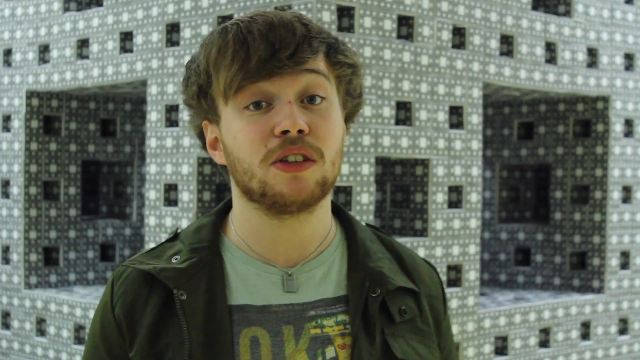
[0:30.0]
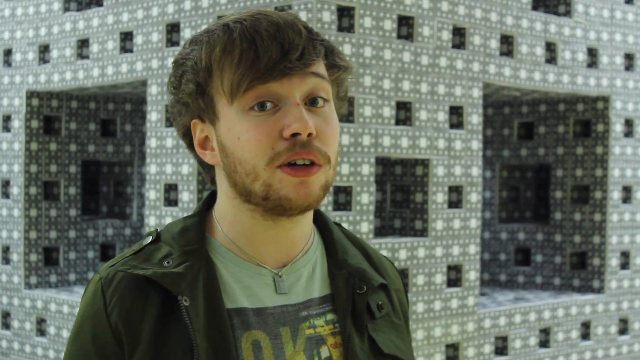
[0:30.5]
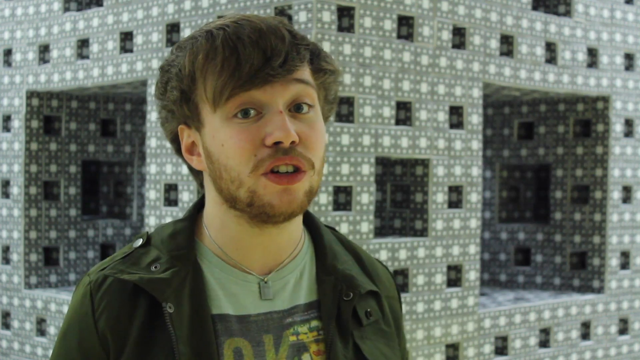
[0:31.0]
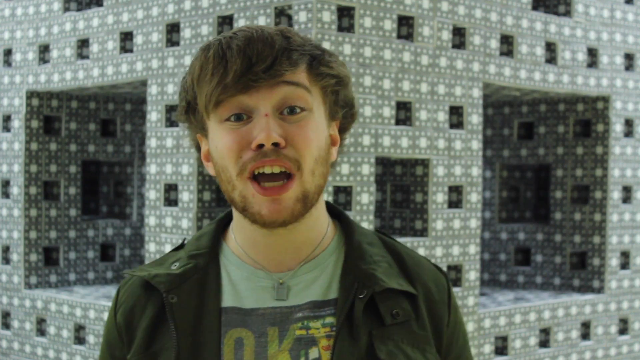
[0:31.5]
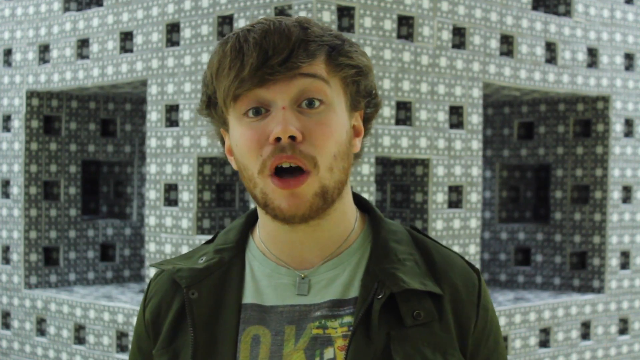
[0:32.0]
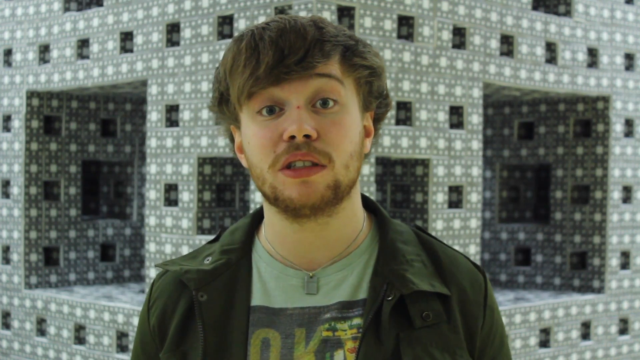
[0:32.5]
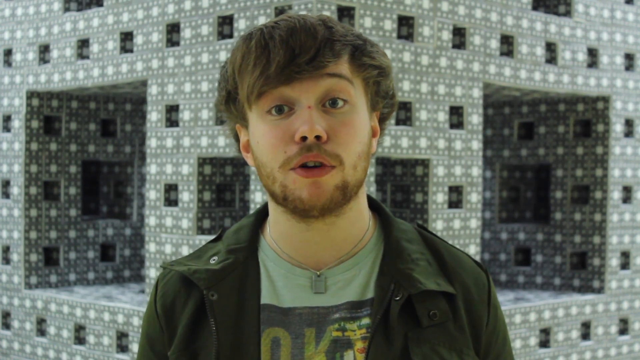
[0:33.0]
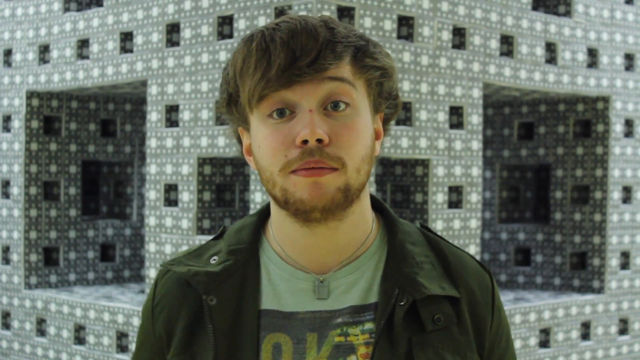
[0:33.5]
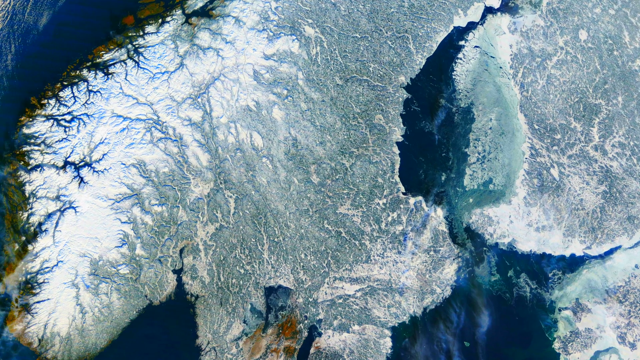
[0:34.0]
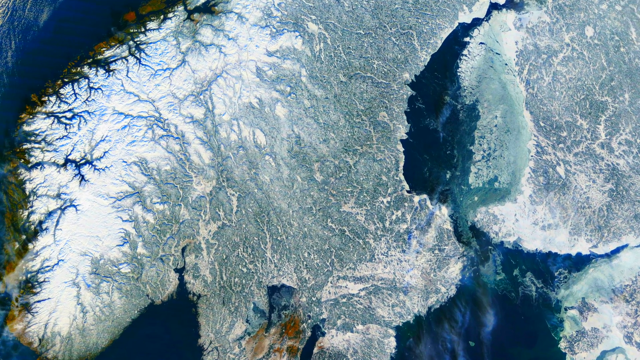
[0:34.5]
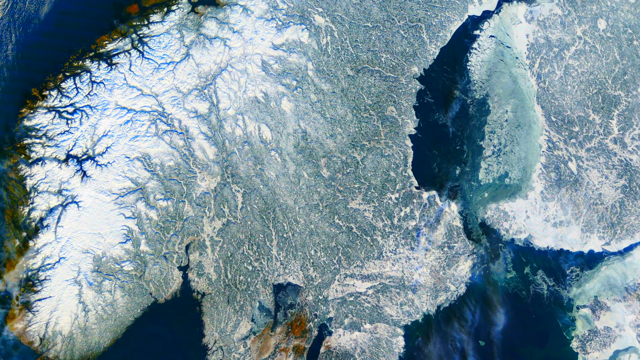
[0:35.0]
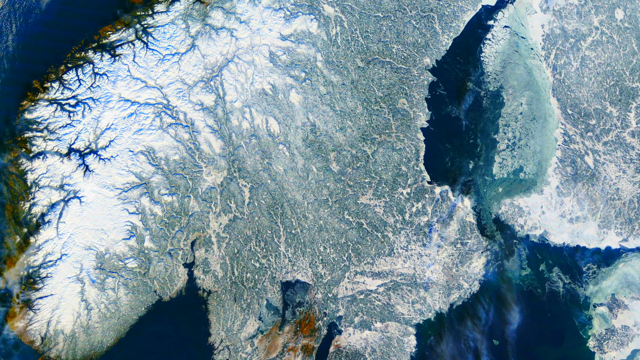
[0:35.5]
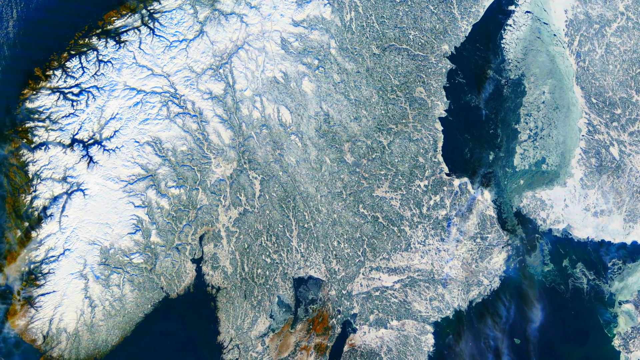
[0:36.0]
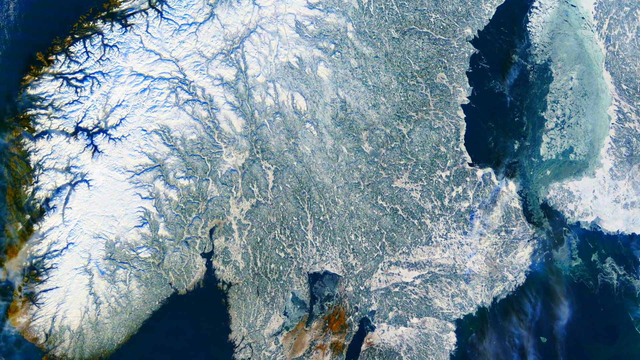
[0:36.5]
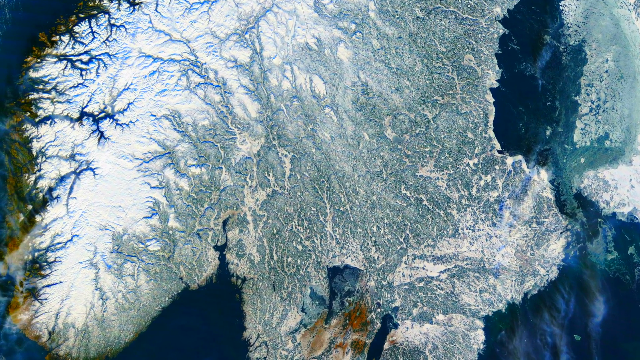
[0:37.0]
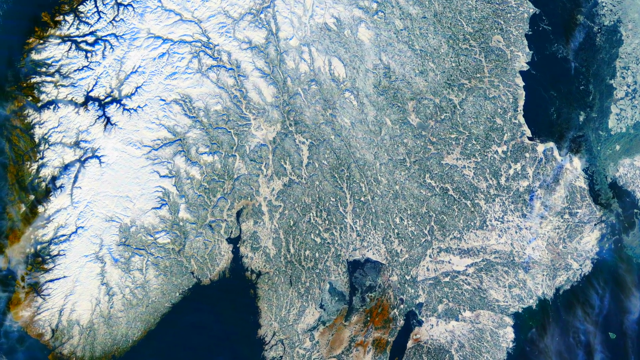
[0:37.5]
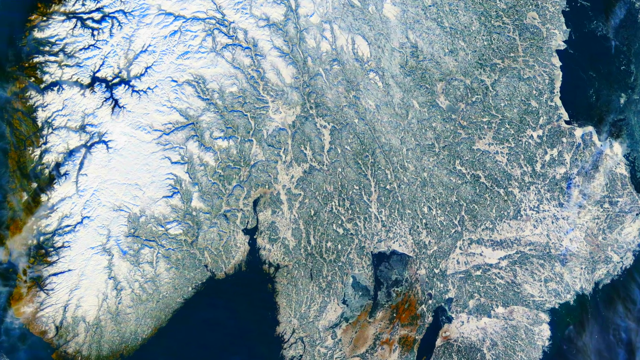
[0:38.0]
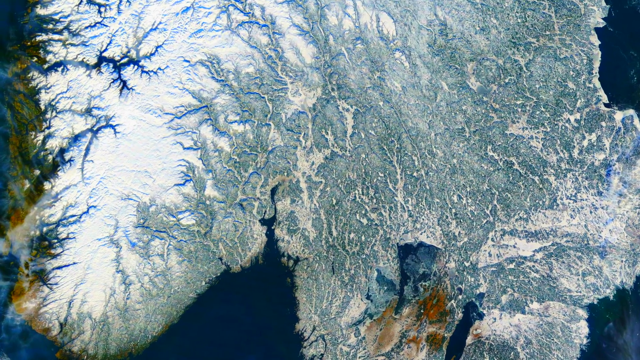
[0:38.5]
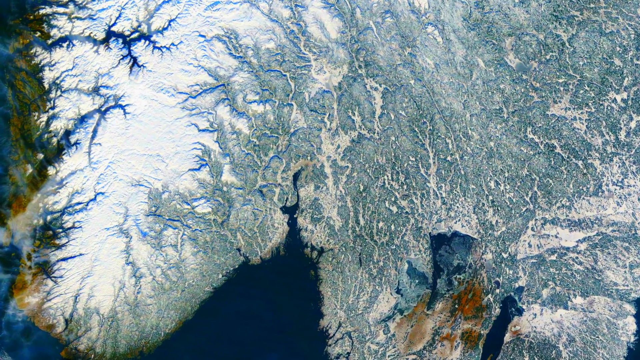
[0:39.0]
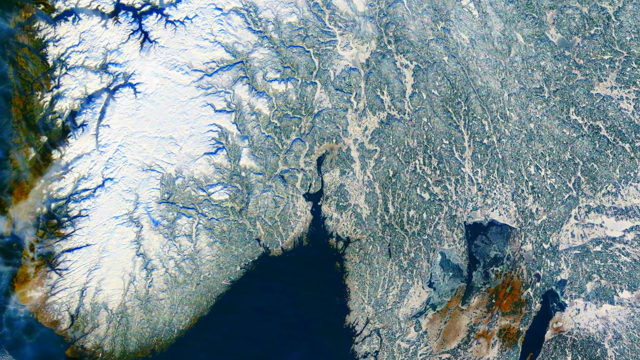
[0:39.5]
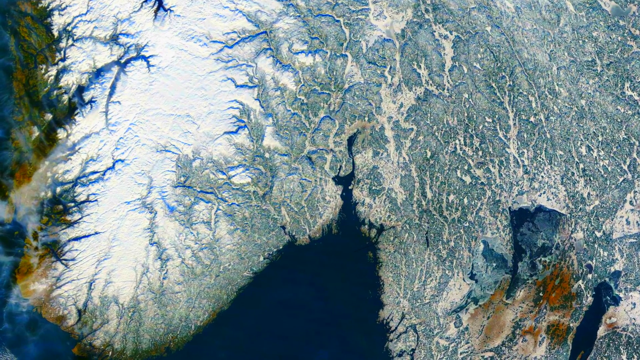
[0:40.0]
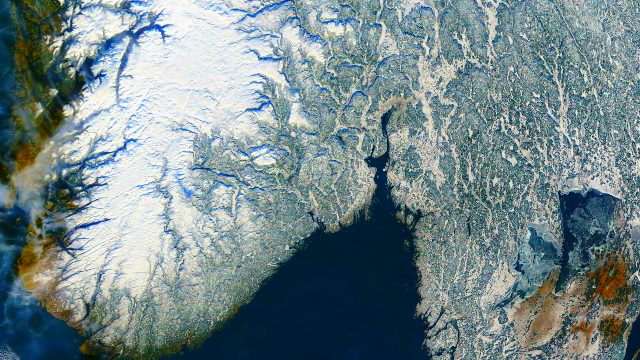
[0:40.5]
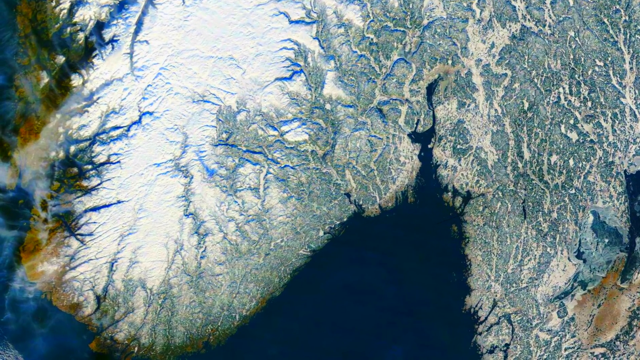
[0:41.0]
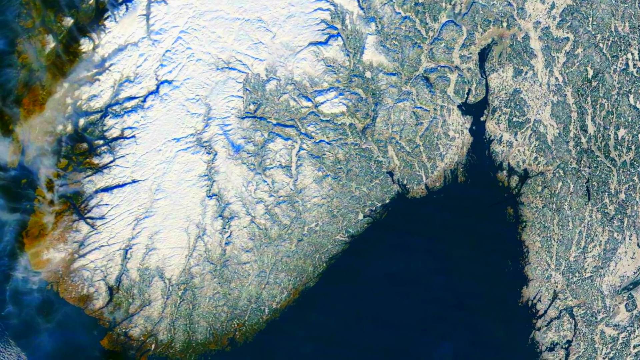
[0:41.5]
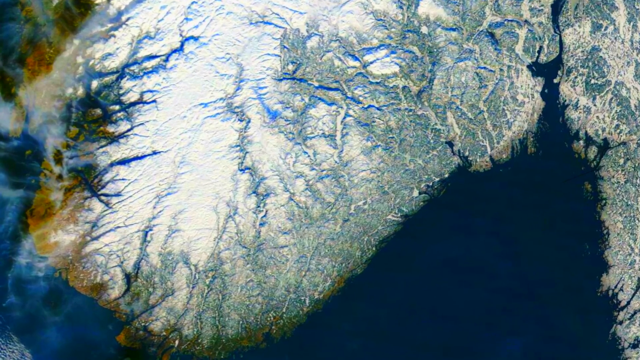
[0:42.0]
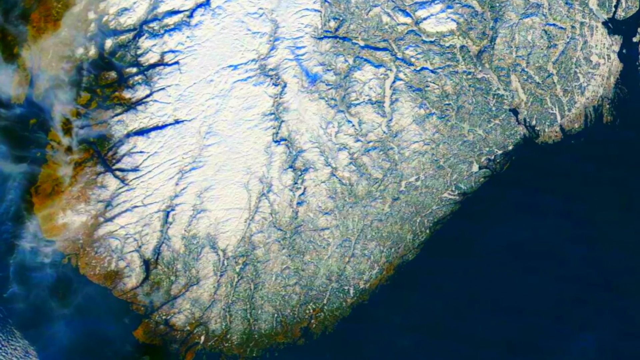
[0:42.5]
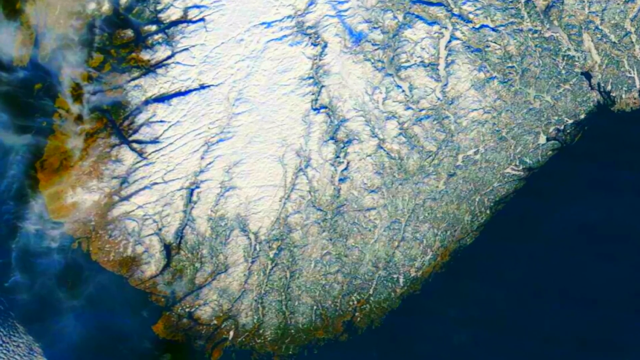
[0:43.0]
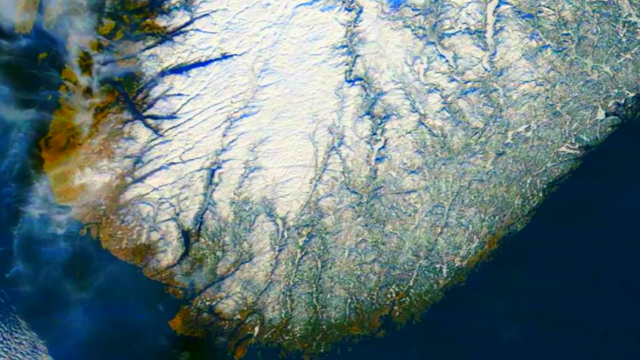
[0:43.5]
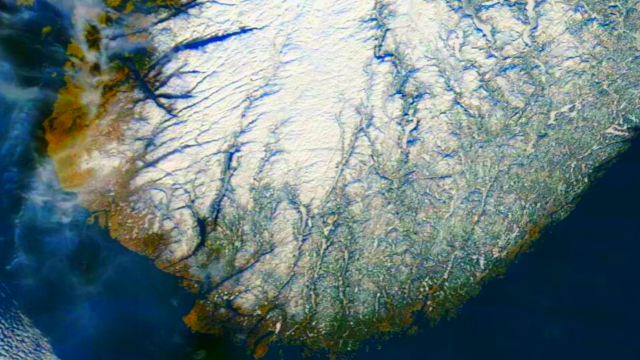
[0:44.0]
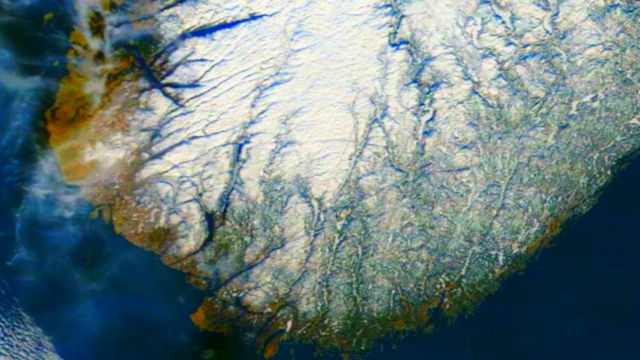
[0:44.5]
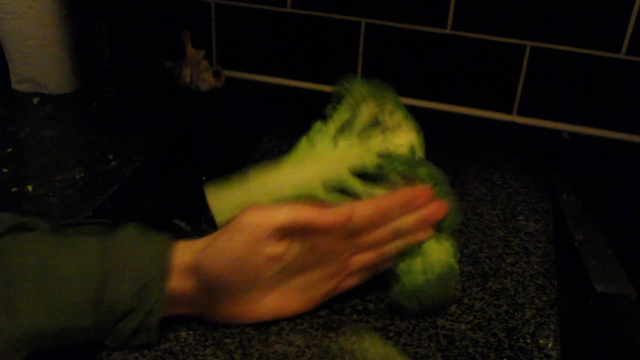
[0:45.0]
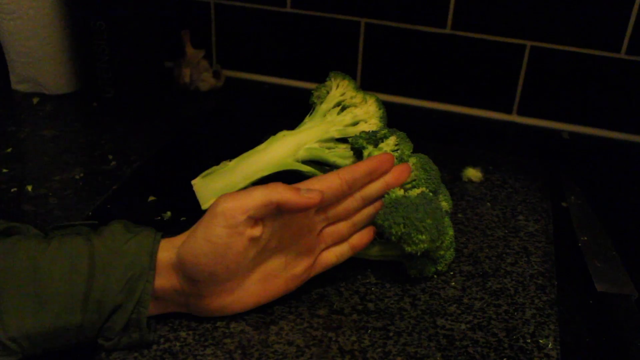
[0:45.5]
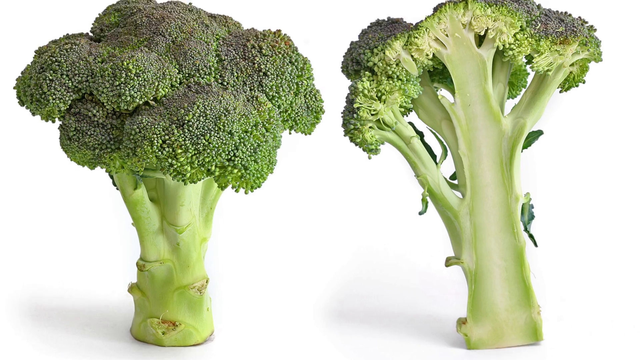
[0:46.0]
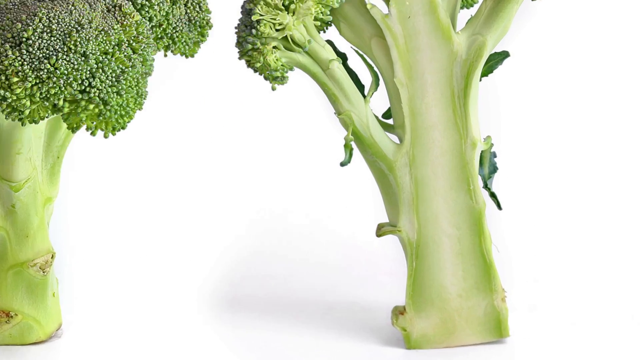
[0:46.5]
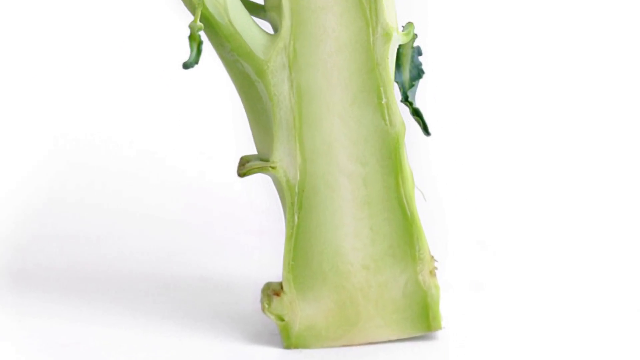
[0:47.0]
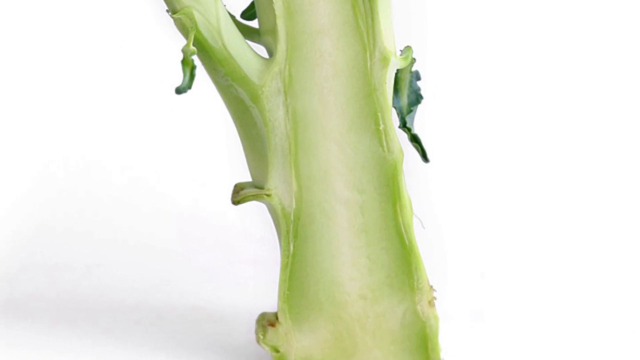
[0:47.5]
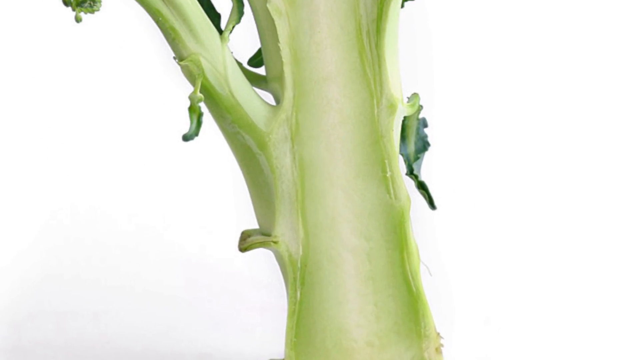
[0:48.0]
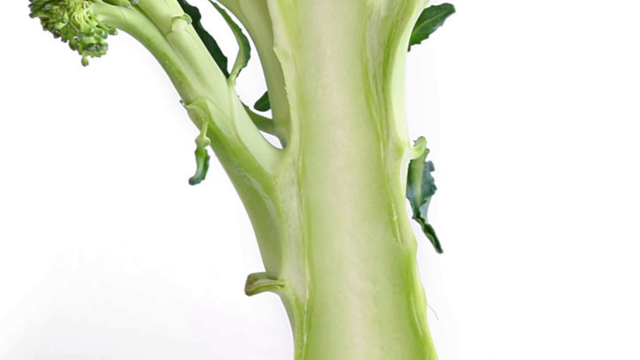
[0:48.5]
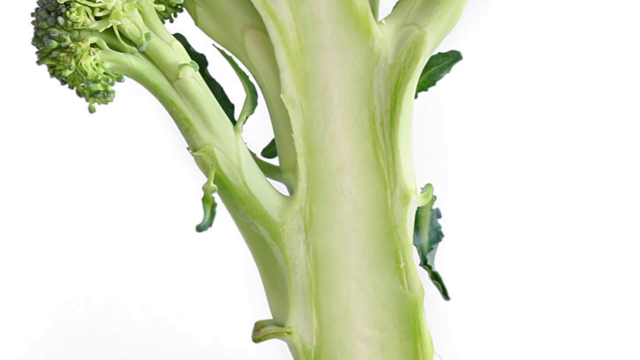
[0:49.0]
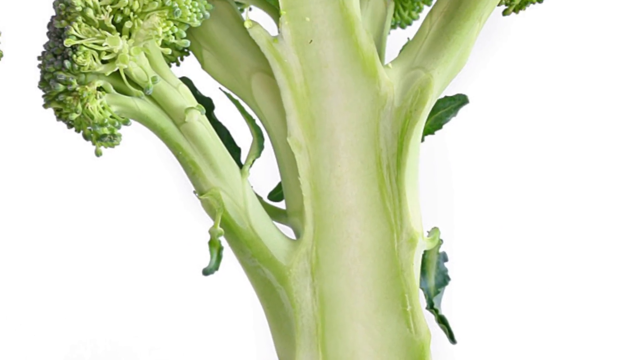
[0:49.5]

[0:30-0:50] Blonde hair is shown, and then an ocean with trees around it, apparently a 3D representation. The view zooms in, then zooms in further. A broccoli is split and divided, showing its interior and how it is formed. The video also depicts someone believed to be in his thirties.